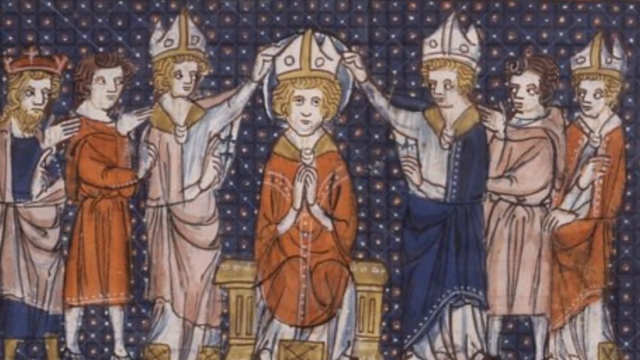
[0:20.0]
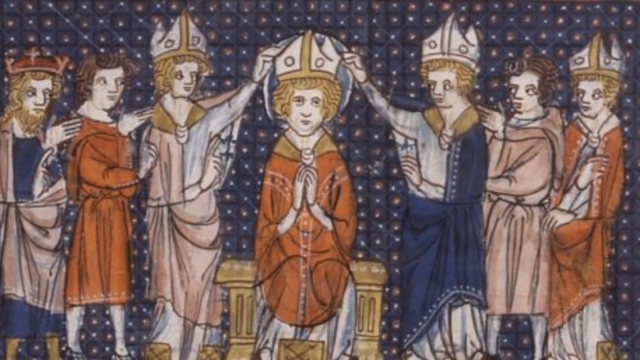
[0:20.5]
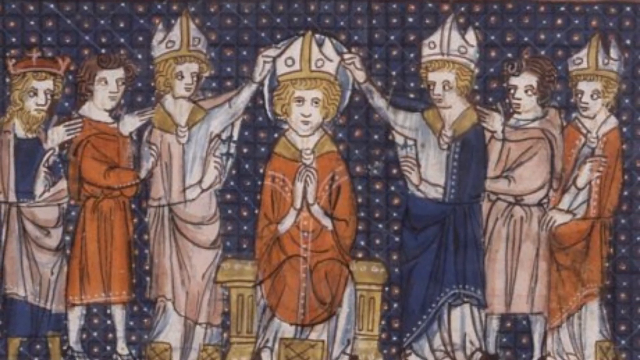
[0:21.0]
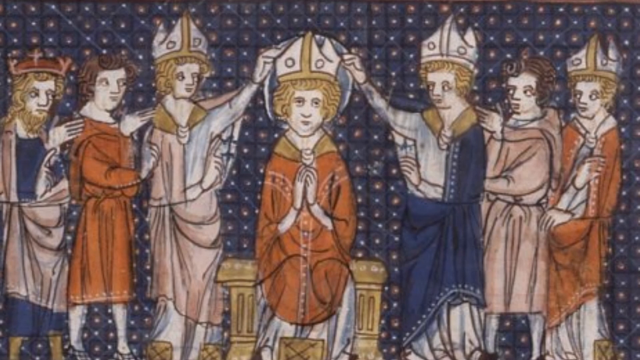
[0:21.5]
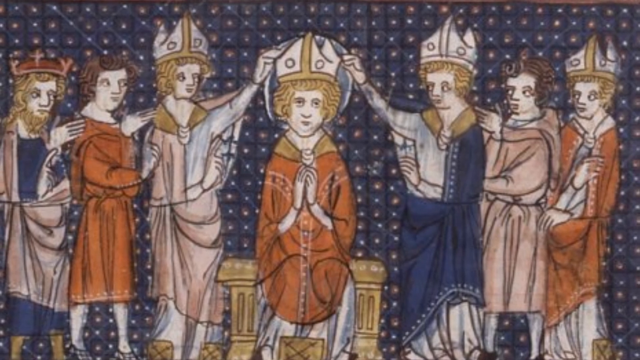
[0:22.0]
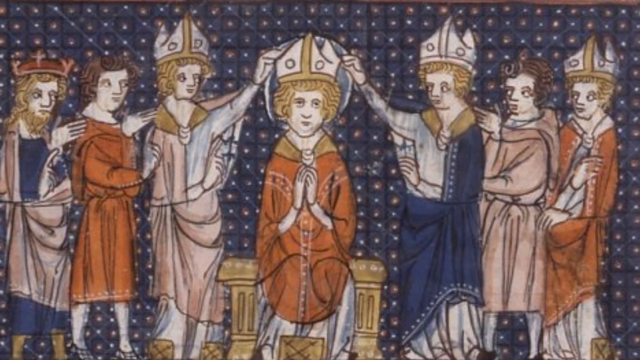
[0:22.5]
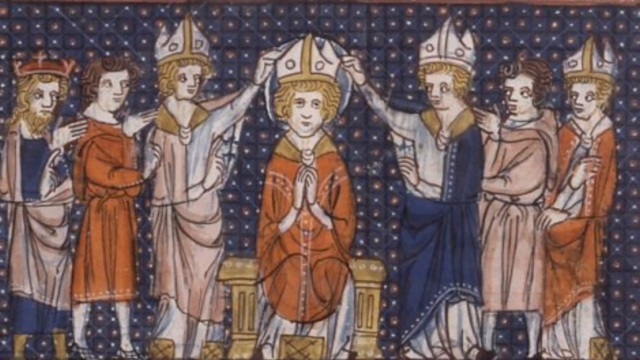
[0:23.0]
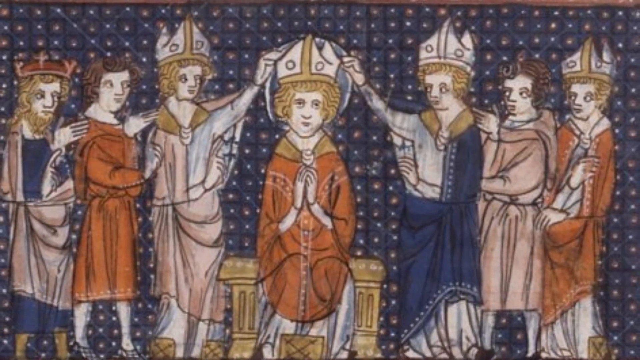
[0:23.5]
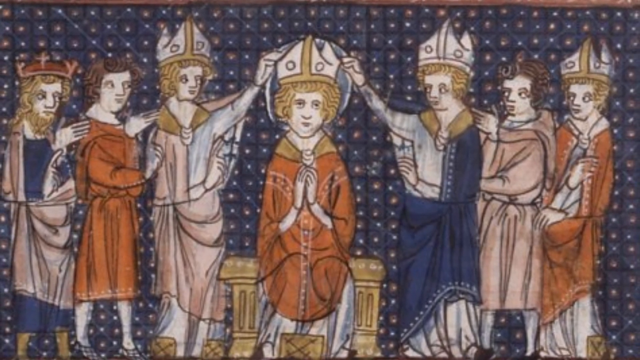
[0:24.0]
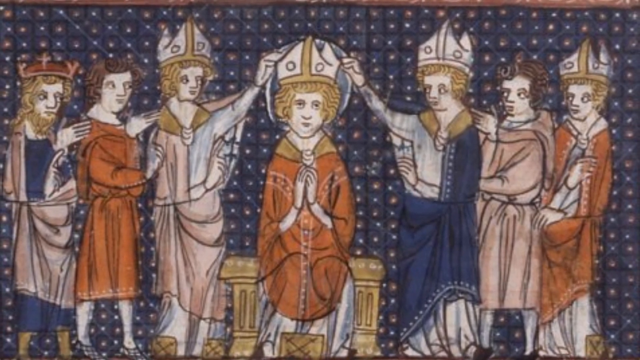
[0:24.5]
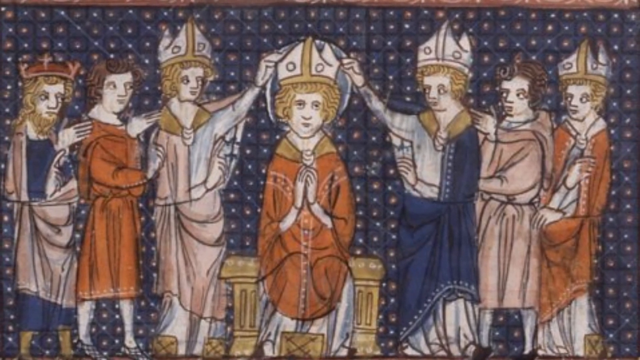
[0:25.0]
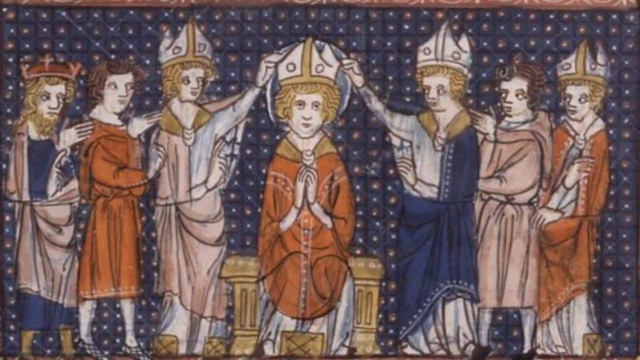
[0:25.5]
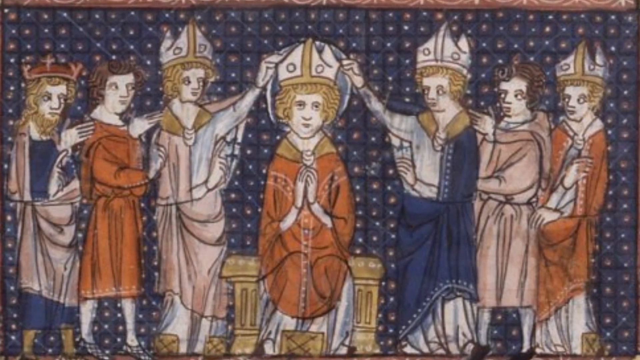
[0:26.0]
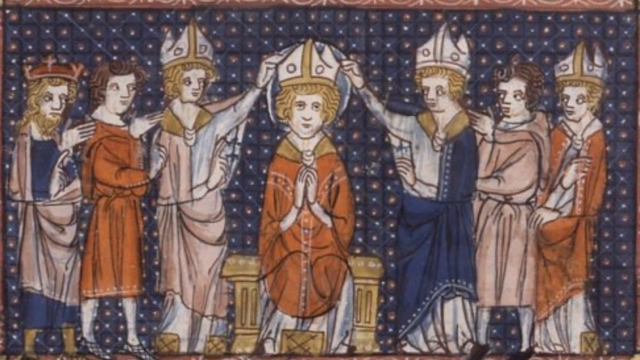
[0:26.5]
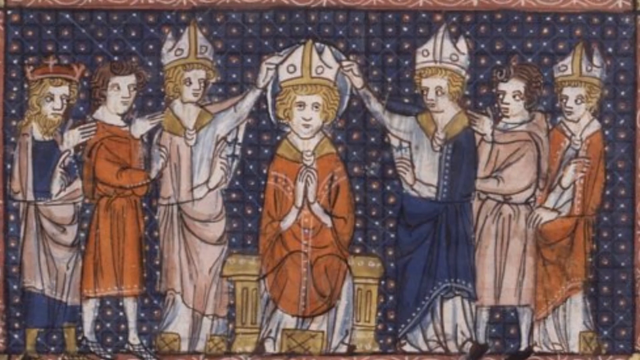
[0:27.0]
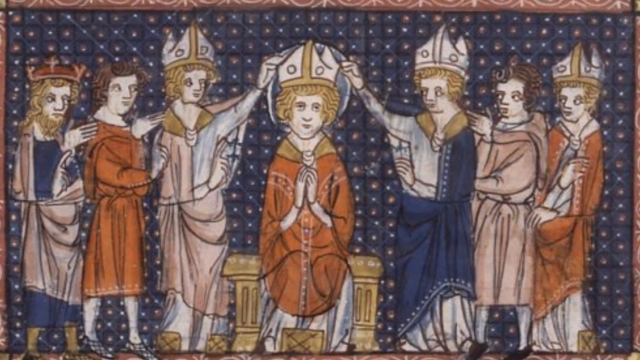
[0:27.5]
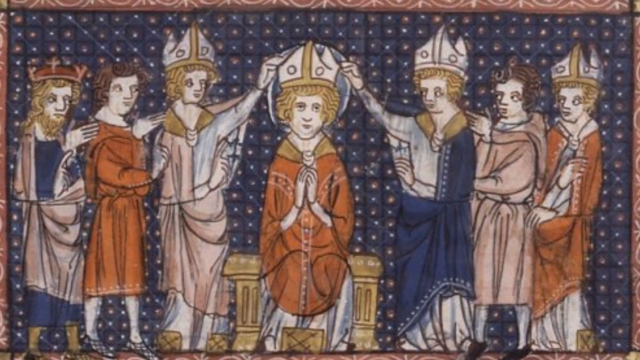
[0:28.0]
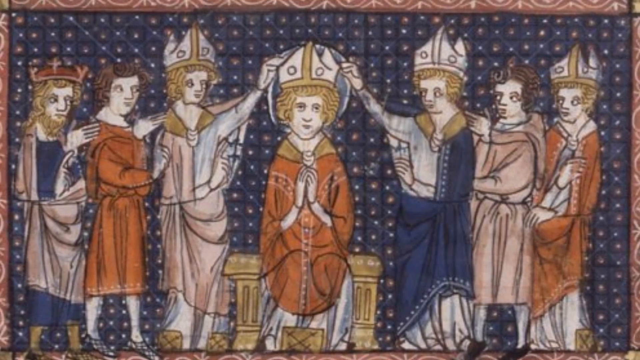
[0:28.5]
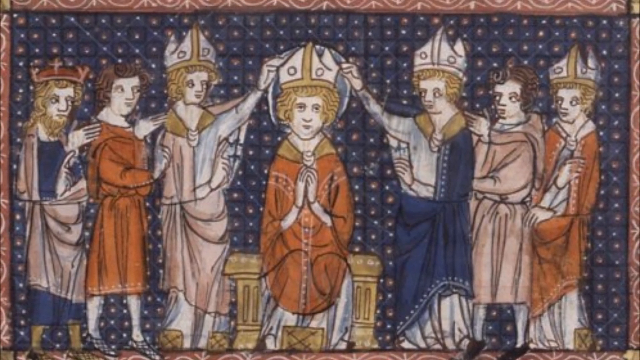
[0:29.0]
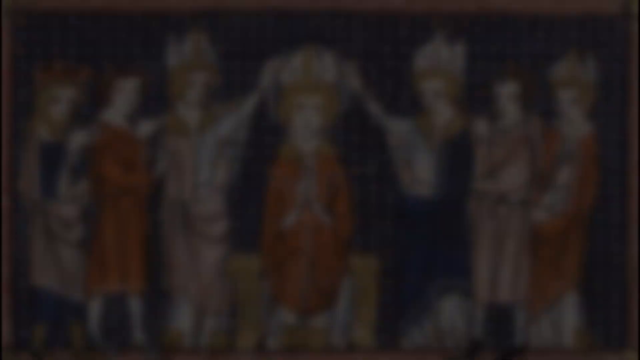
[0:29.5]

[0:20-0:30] The artwork of seven men remains on screen. The man in the middle has his hands folded as if praying and looks very serious. The two men on either side of him are holding up or touching his hat, or holding something up. All seven wear robes: three are orange, three are light beige, and one is darker. Apart from the man in the middle, all of the men are looking over; only the one in the middle looks toward the viewer. The background almost looks like disco lights. The picture slowly fades out and then stops.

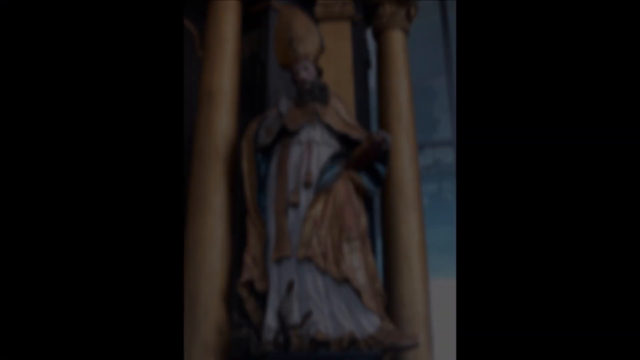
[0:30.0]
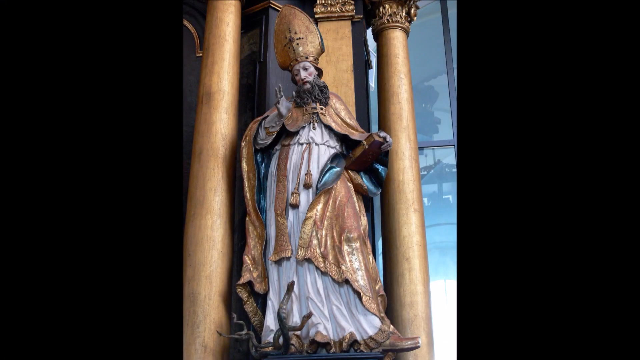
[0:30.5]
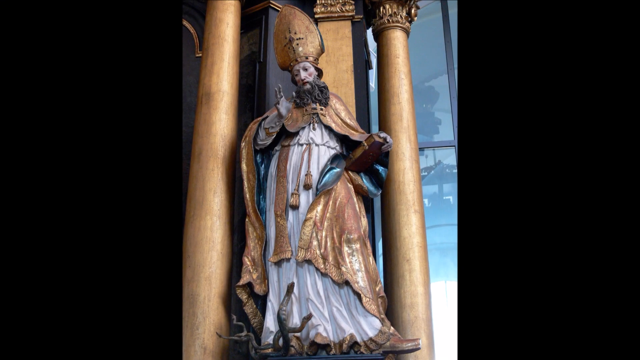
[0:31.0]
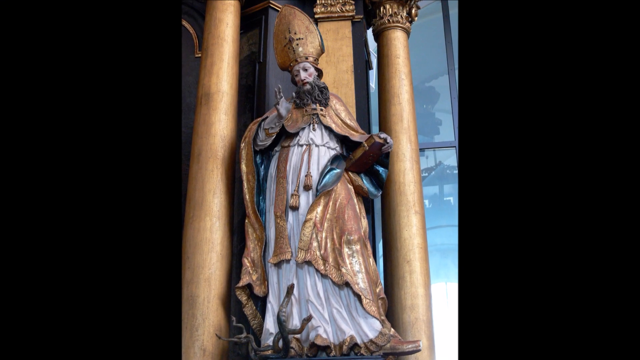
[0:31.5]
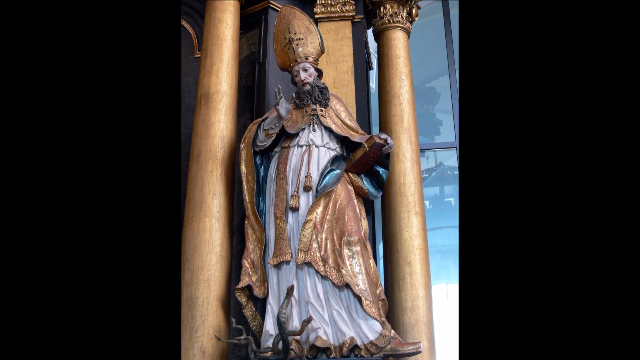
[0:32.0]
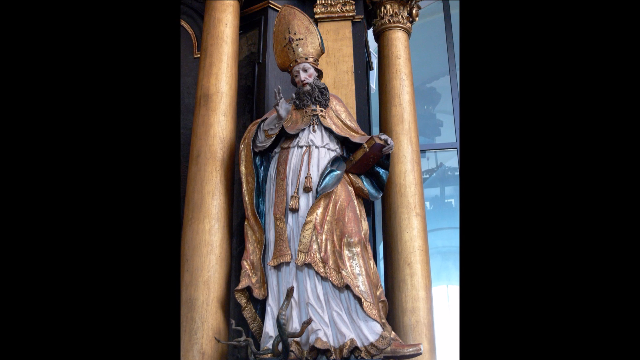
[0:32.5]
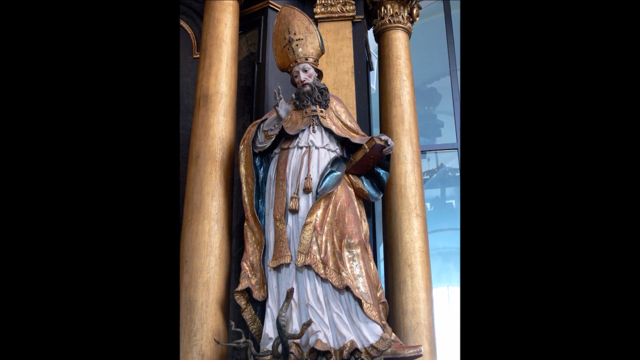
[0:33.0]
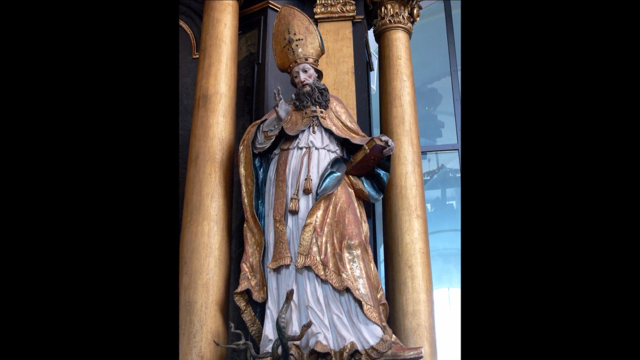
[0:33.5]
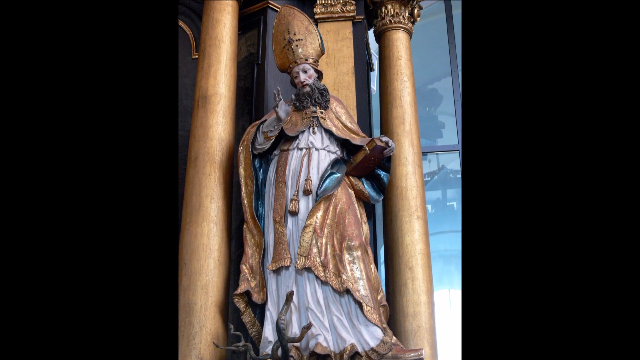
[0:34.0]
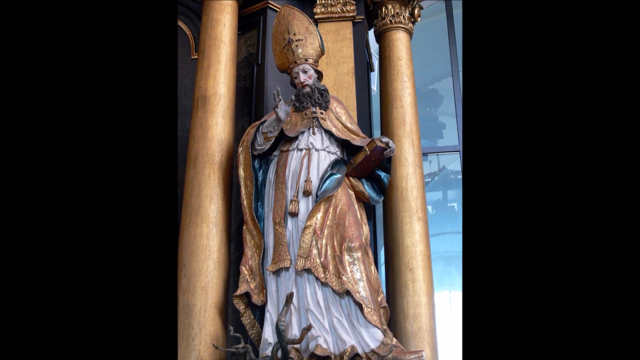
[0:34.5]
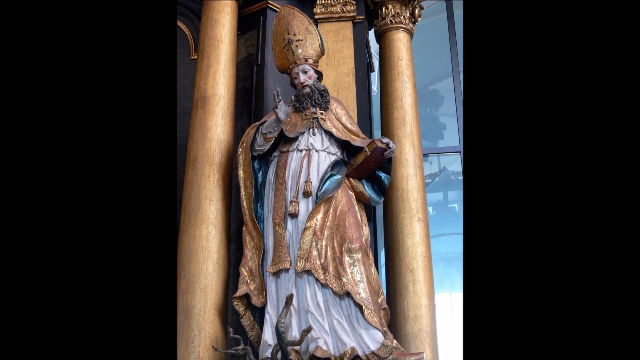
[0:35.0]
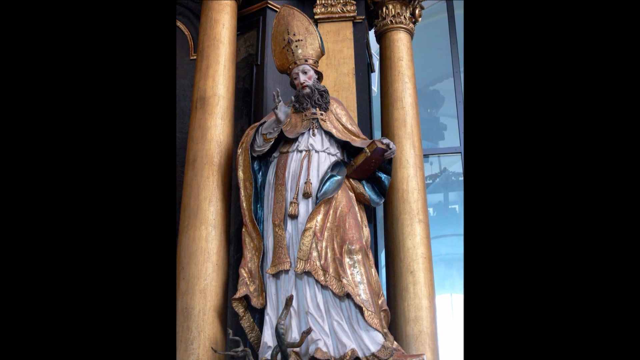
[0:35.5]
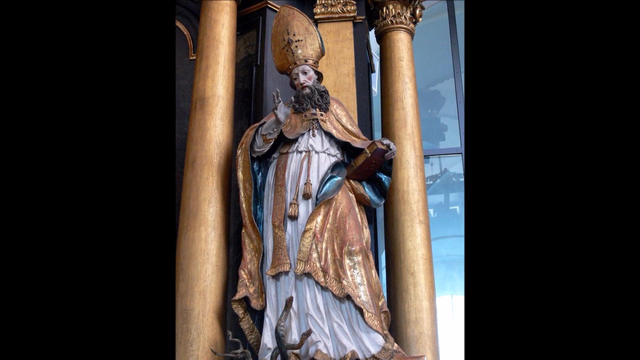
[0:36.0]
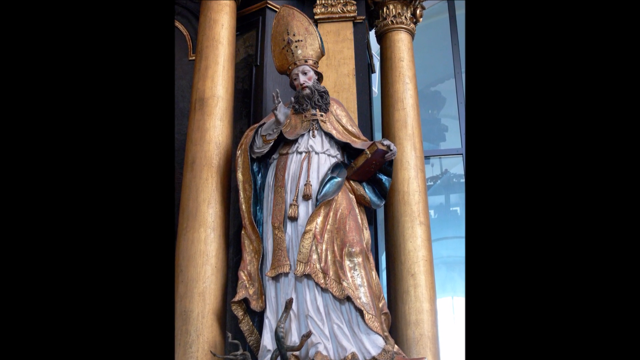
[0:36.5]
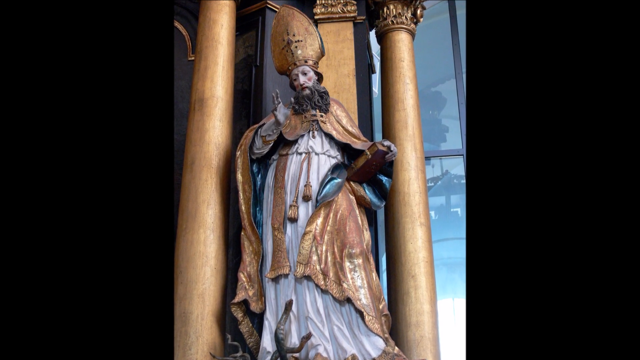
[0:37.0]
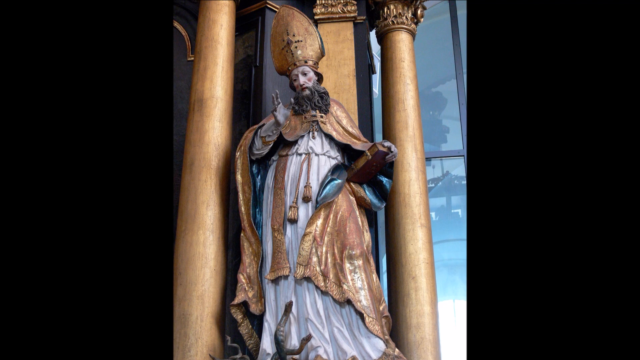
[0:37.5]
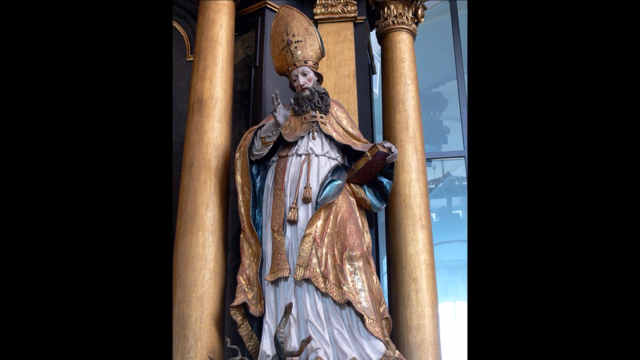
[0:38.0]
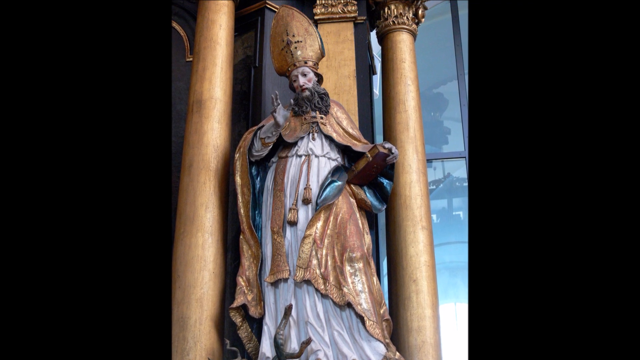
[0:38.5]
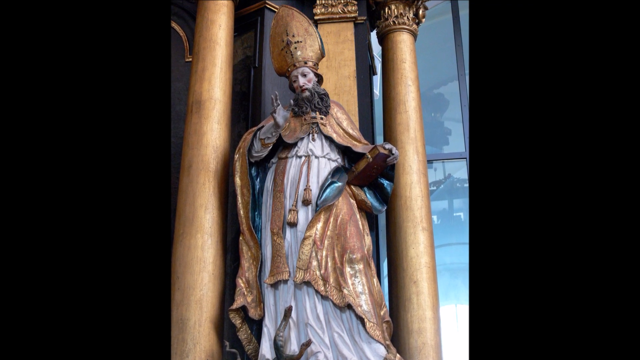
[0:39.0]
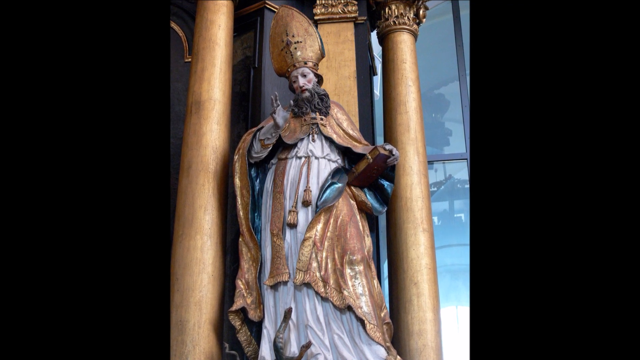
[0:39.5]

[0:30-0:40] A statue with some color on it appears, with gold pillars around it, and the camera looks upward. The man wears a large decorated hat that kind of sticks up and is bigger than his head. He has on a white robe with a gold and blue covering over it. He looks down, not straight ahead. His right hand is out, and his left hand holds a book that reaches his waistline. At the bottom of the robe there might be a stripe, though it is hard to tell.